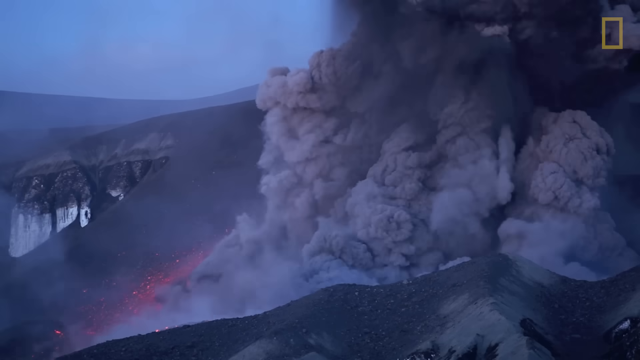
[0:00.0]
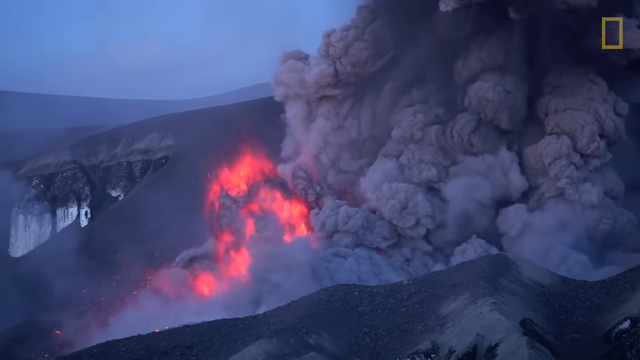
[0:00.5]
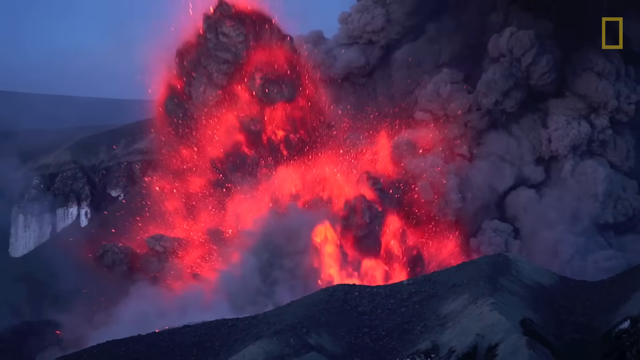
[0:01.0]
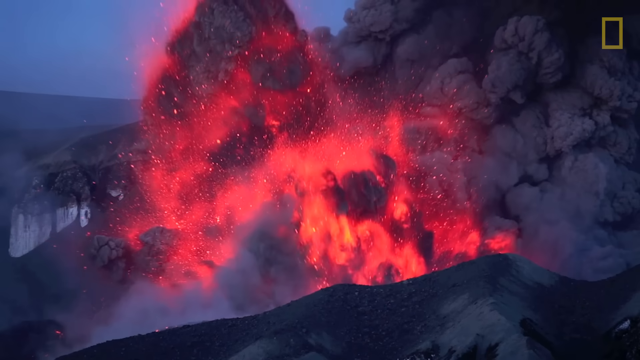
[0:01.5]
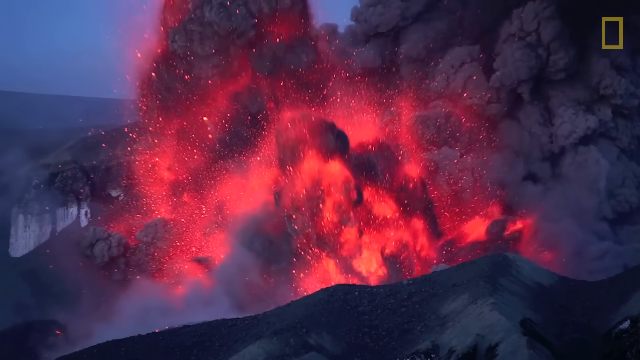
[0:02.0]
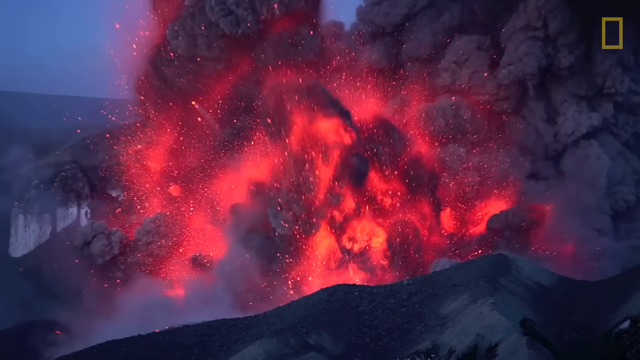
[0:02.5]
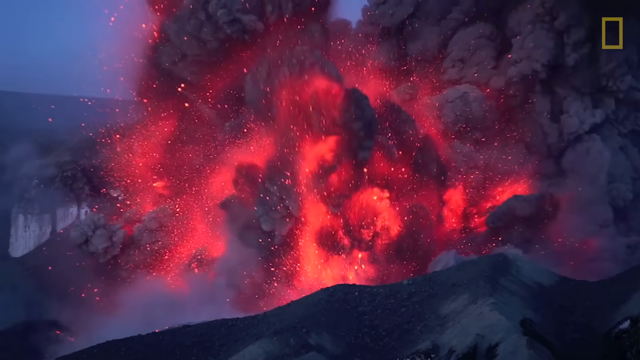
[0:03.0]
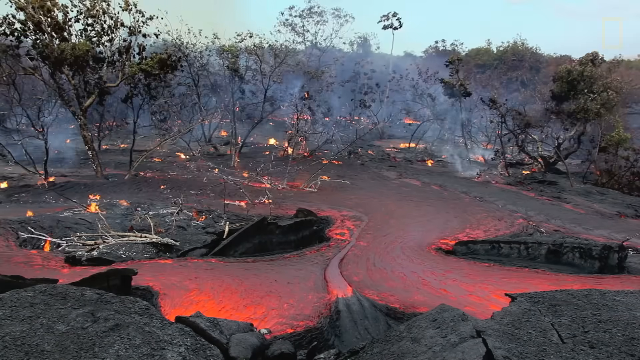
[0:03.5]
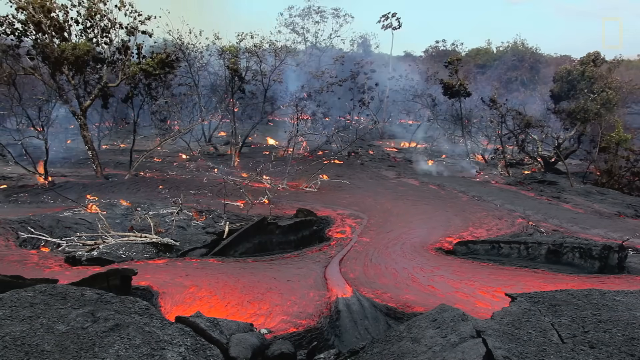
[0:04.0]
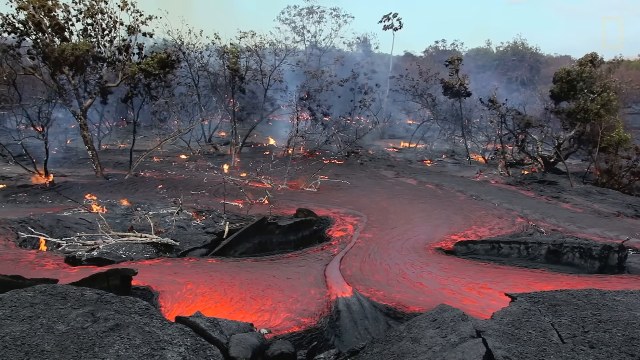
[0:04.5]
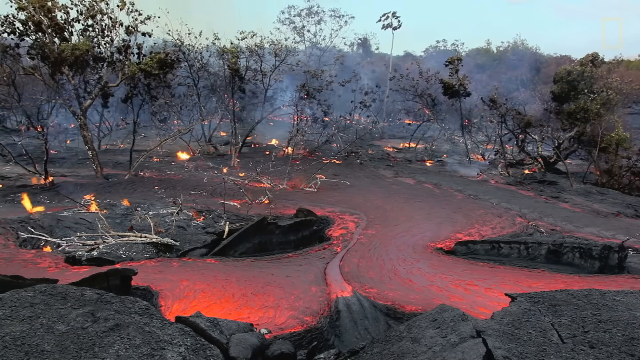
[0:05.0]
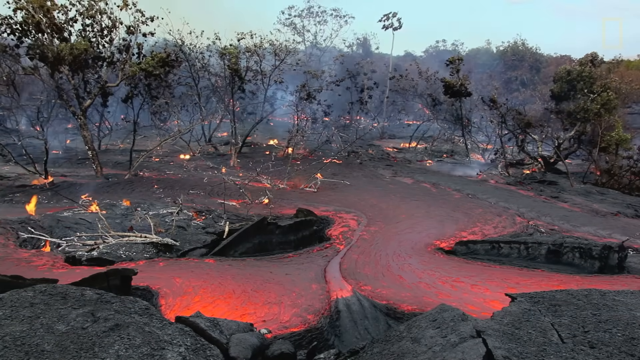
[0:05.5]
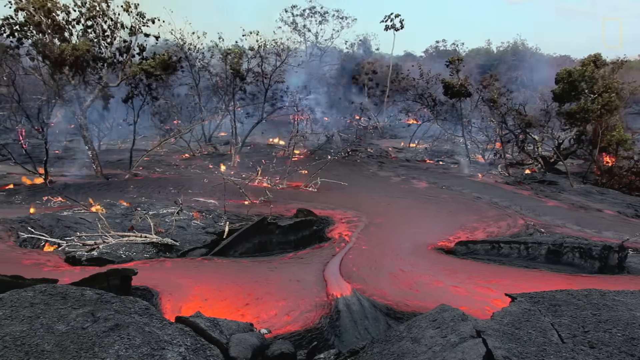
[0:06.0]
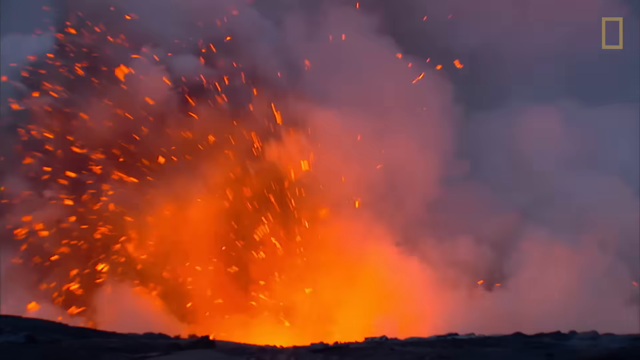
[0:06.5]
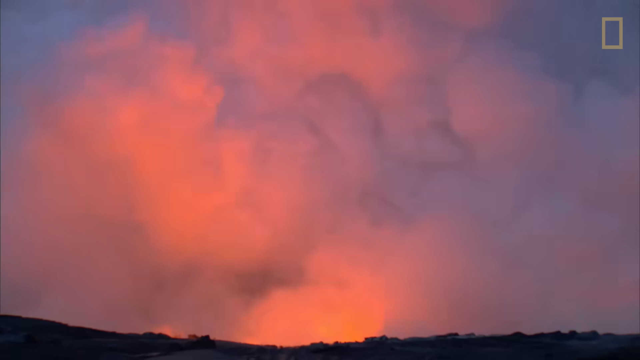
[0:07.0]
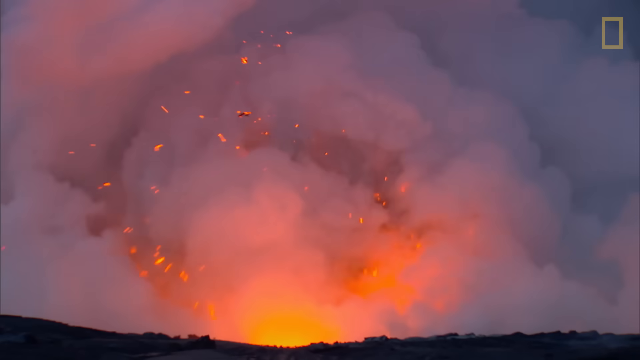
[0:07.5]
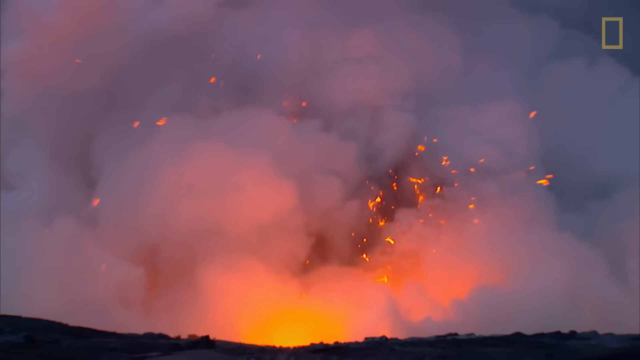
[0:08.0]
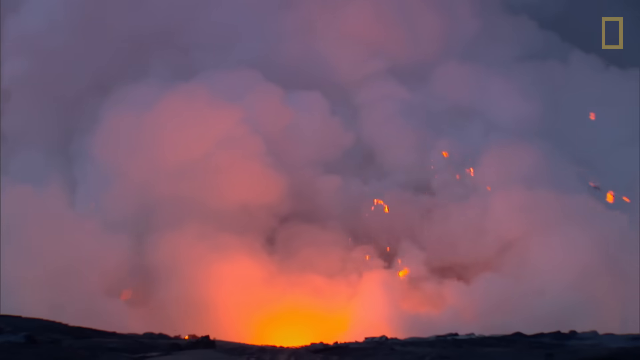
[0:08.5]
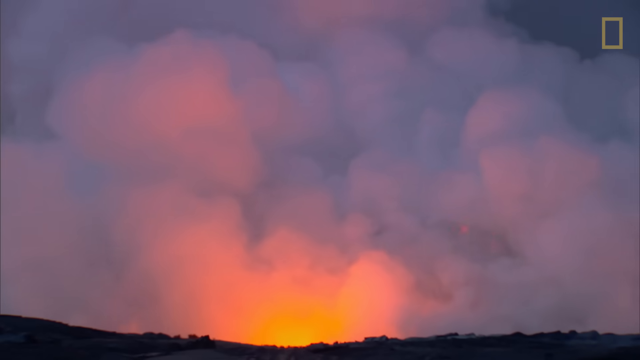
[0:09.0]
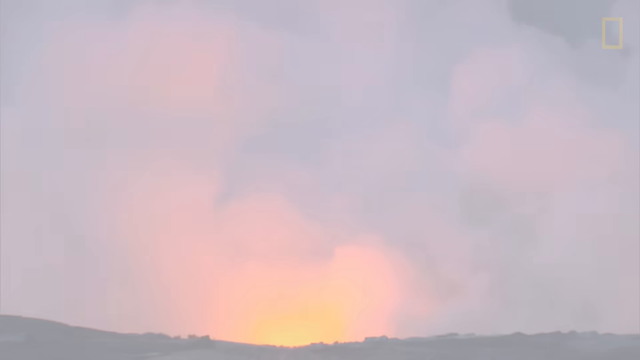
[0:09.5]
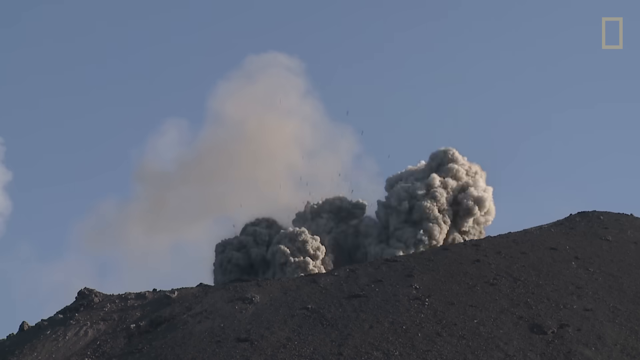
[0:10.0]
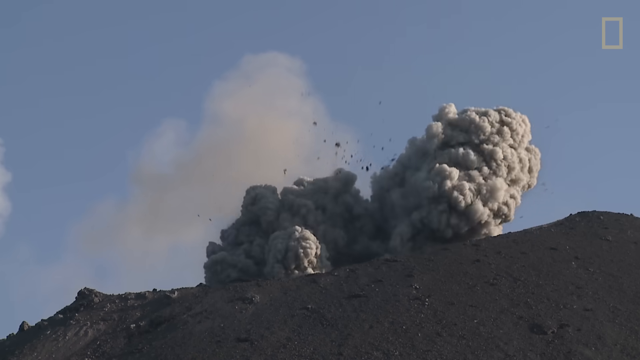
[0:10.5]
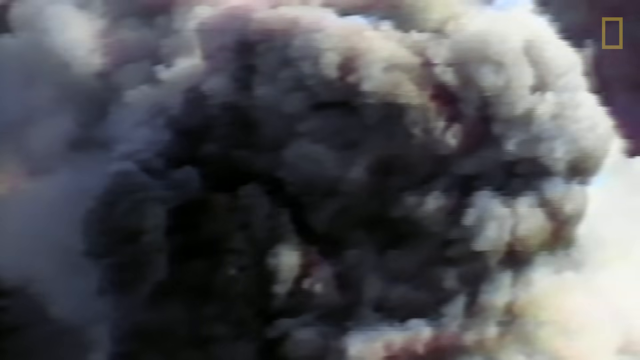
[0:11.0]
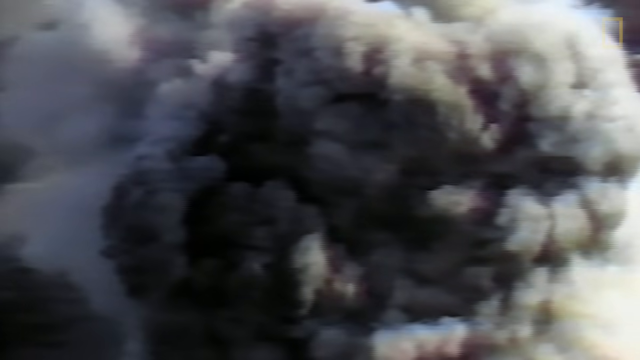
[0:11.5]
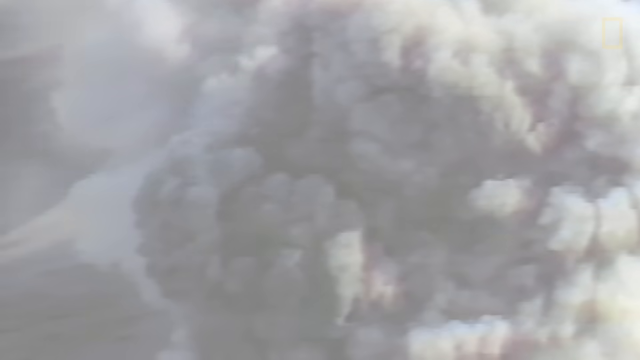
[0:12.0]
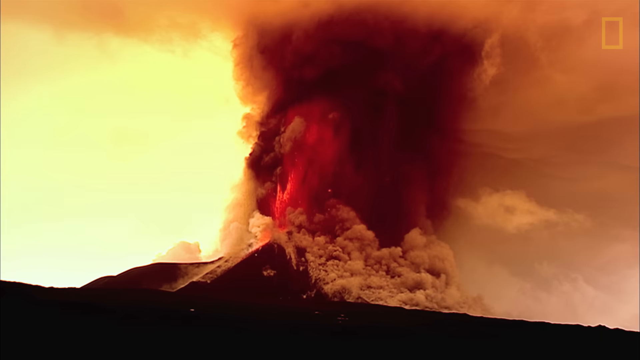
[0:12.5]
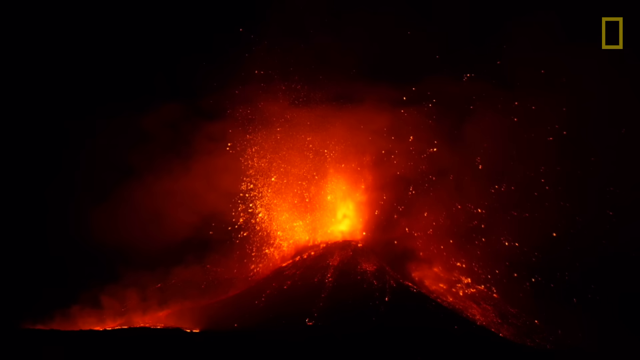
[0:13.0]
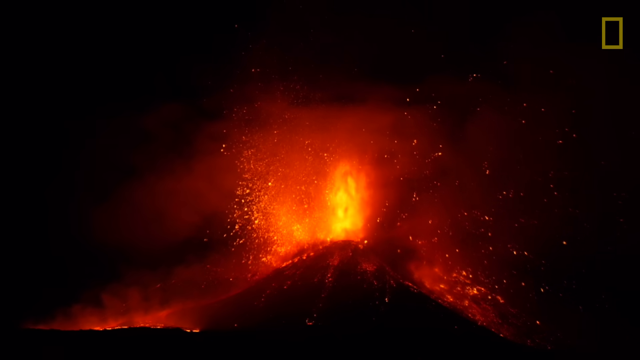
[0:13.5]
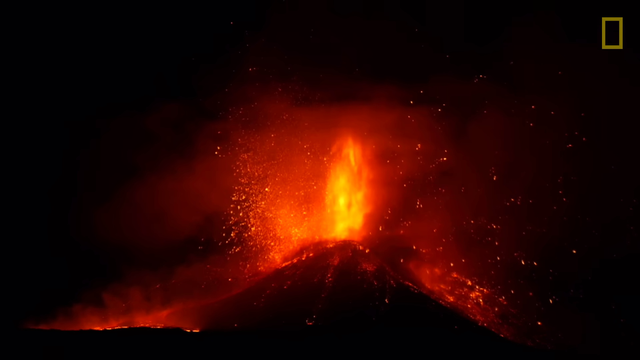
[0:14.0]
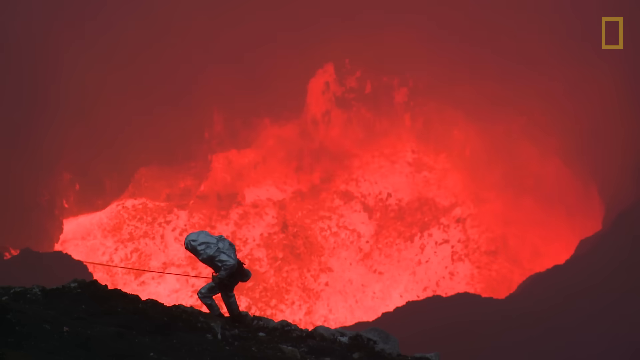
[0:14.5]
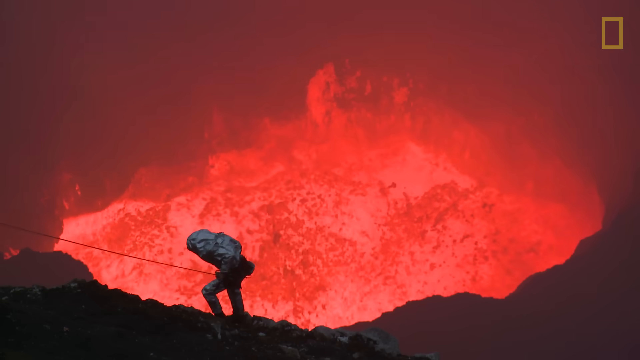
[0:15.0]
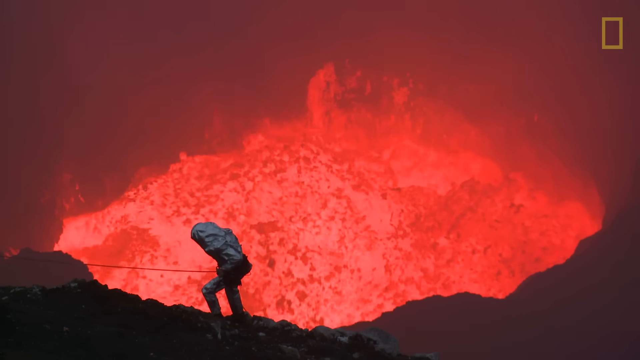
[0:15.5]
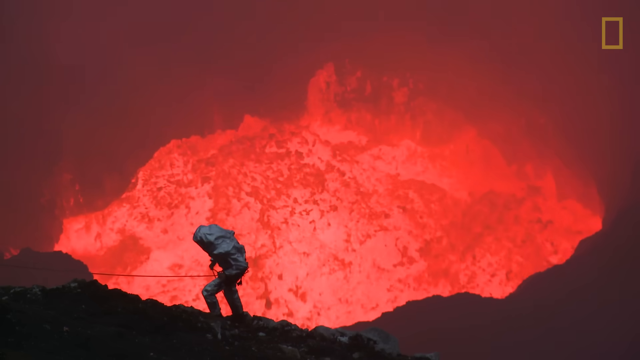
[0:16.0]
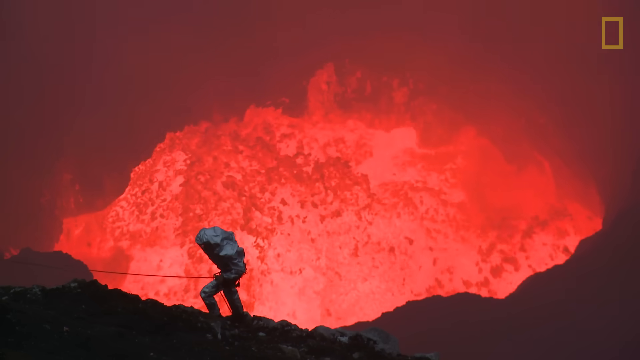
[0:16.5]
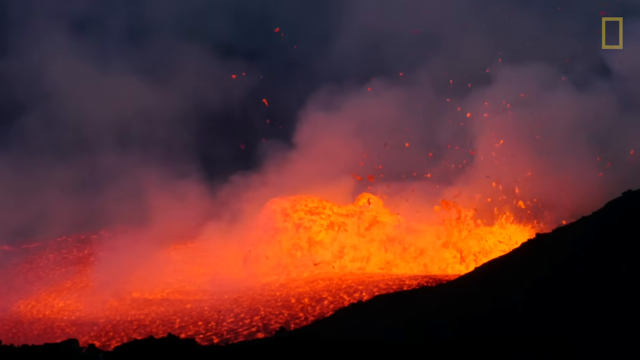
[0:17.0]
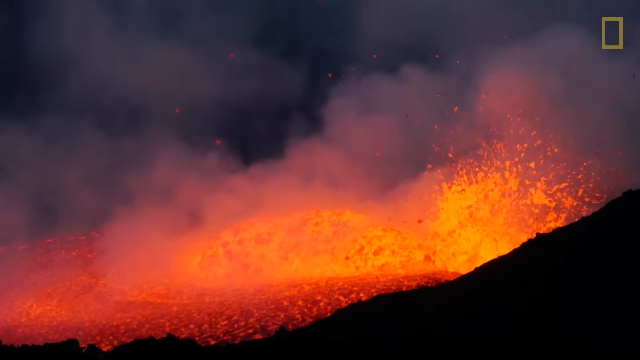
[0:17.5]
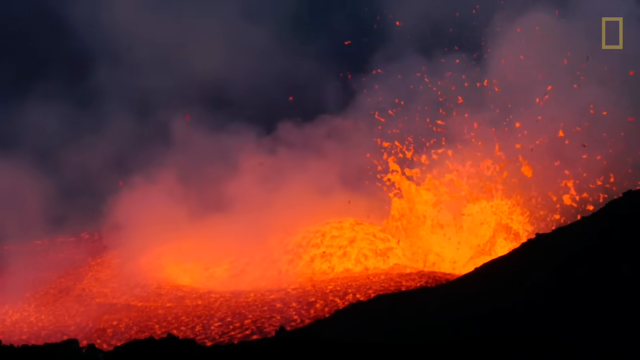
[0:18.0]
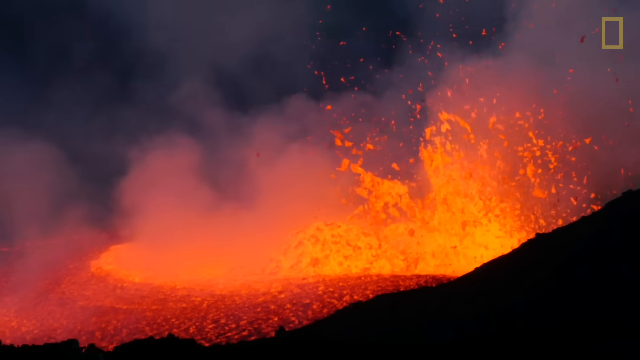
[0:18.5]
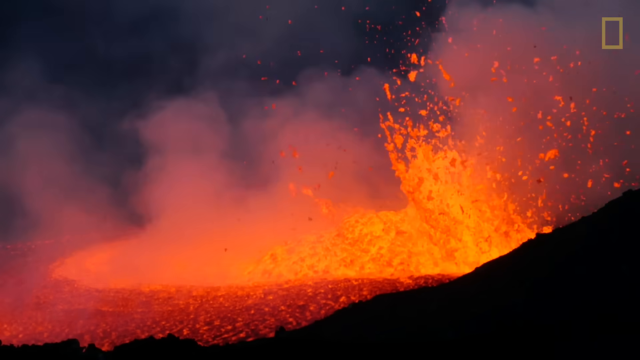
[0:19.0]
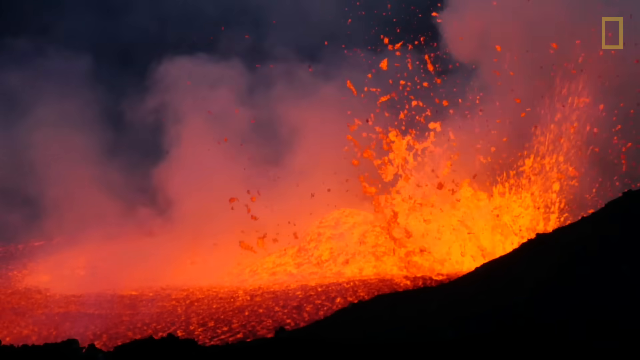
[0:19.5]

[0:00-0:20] Thick gray smoke rolls all the way up to the top of the frame and over to the right, while the left side shows a dark blue sky and a little bit of the ground. A huge red explosion then shoots all the way up to the top of the screen, covering almost all the way across from left to right. The shot cuts to rock across the bottom with little red streaks of molten lava all through it. Some rocks are burnt black, trees are knocked down, and the trees still standing are badly burnt and smoking heavily. Fires are visible in the distance, with blue sky across the top. Another big smoke cloud turns bright orange in the center, and then something like an explosion in the center turns it yellow; the smoke rolls very fast and little yellow embers fly everywhere before sort of disappearing down into the smoke. The whole screen is then covered in dark, thick gray smoke, and a couple more volcanoes explode yellow and red lava out of their tops. A man at the bottom, just left of center, crawls down the side, with molten lava visible in the center of the screen. A couple more shots follow of lava shooting up, yellow and red in color.